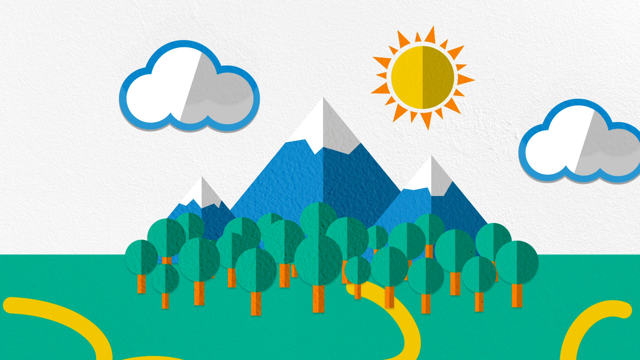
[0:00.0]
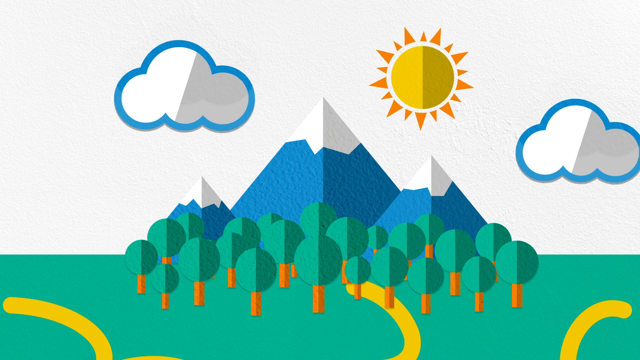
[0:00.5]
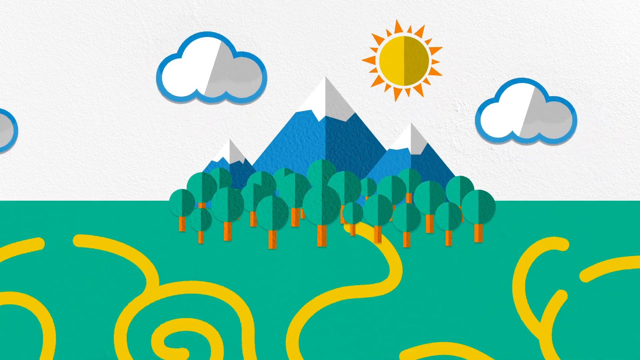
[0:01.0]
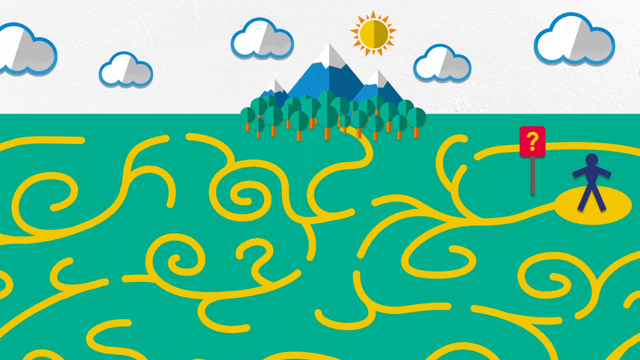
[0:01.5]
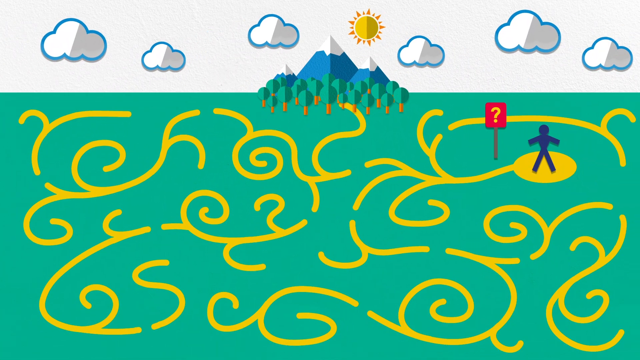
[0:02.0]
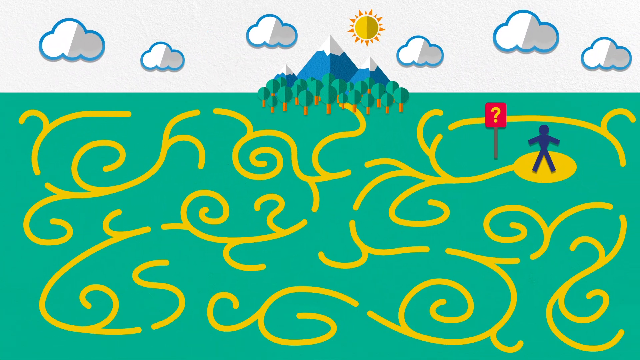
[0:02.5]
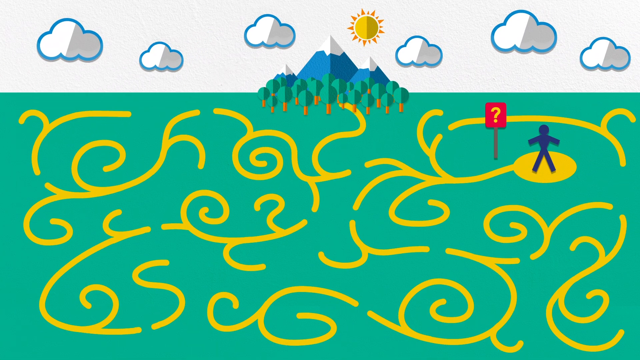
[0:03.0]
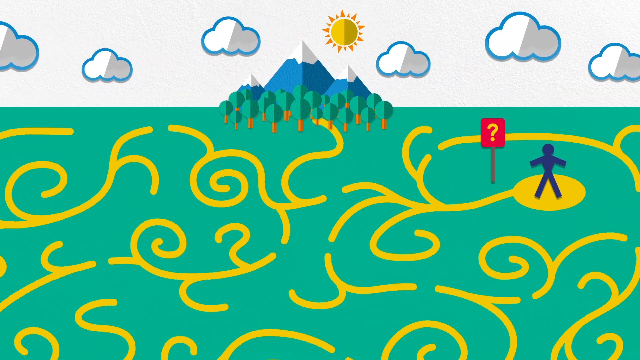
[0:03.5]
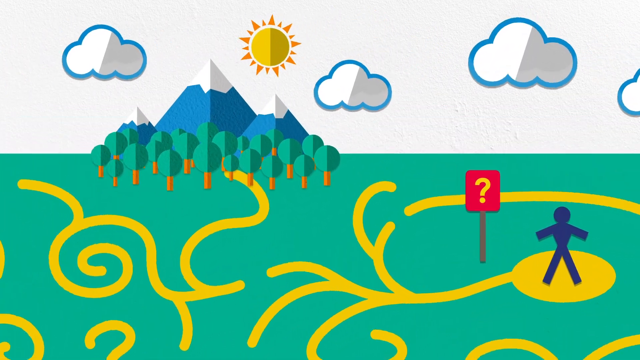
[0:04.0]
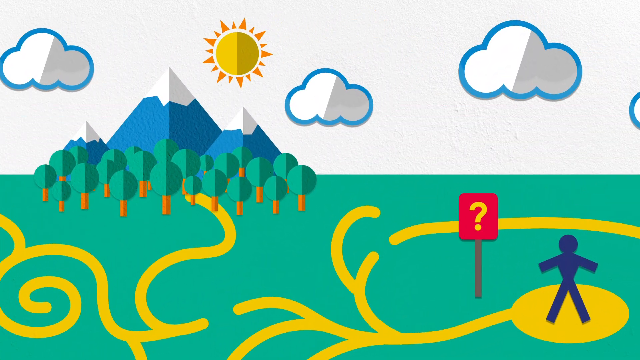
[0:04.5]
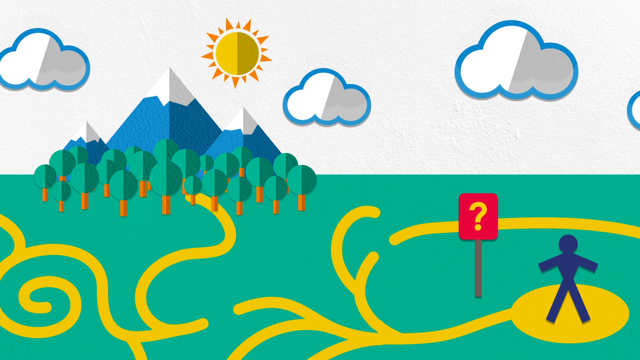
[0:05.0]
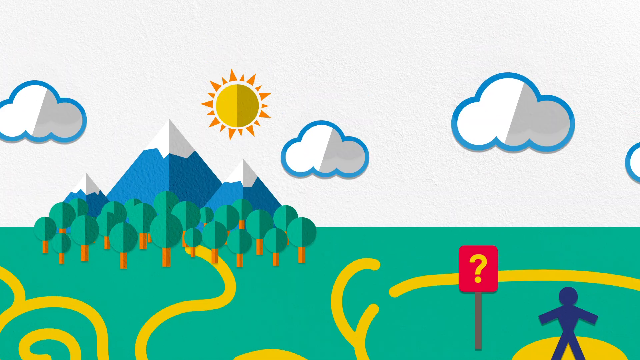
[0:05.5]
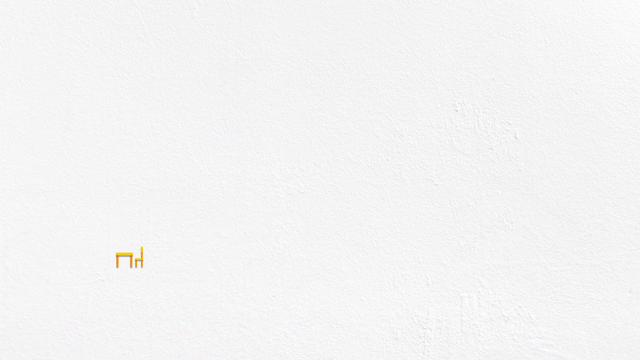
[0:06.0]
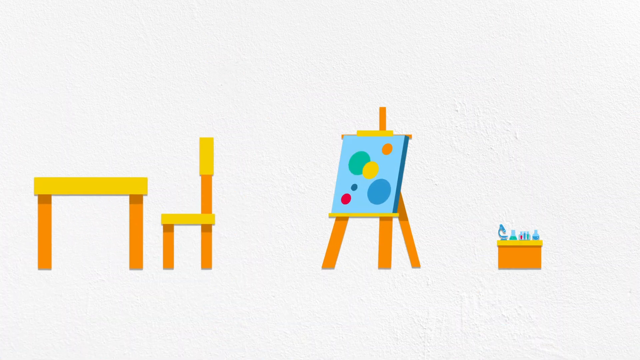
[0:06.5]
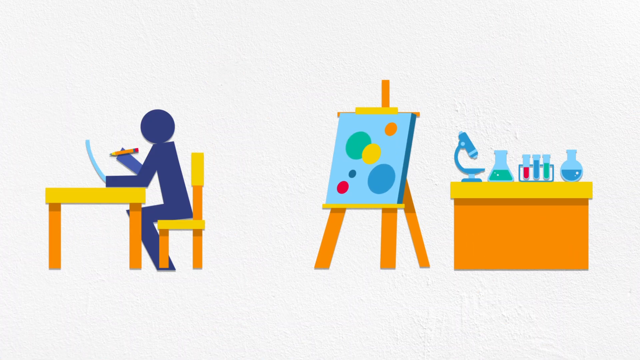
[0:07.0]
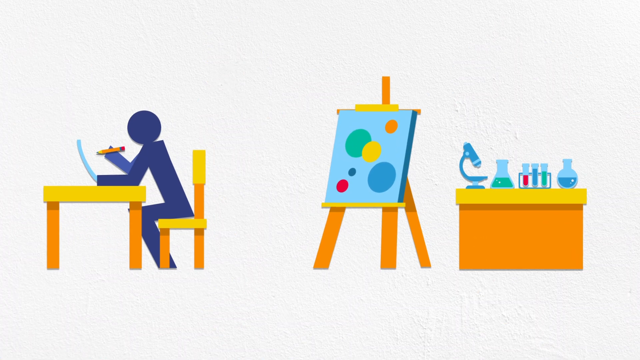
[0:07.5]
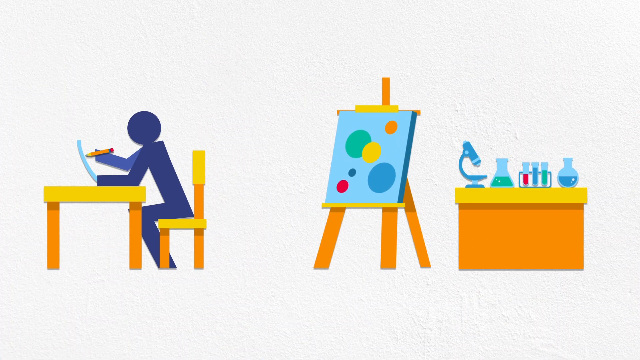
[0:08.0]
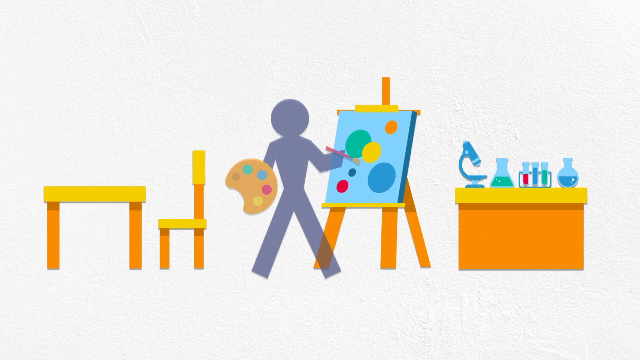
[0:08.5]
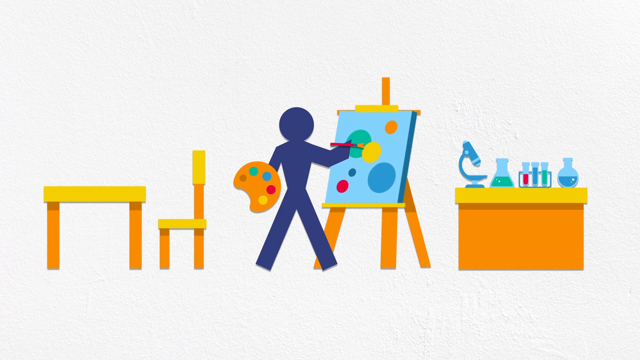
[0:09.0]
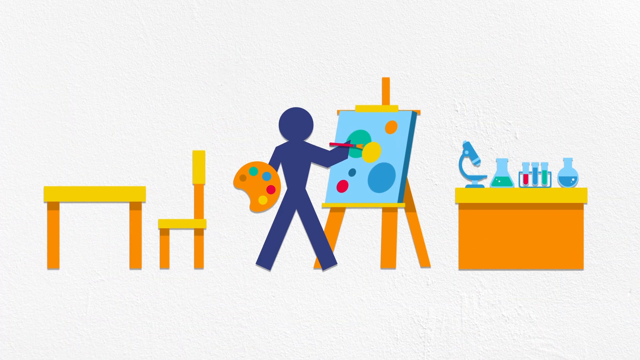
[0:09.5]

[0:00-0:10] The animation shows clouds, the sun, mountains, trees and green ground. More clouds appear, and a purple character is near a question mark sign, with yellow parts at the bottom. The sun keeps rotating and the clouds keep moving. The clouds then disappear and a new scene shows the purple character sitting on a chair, holding a pencil and writing something on a paper. A canvas is next to the character. The purple character jumps up and starts painting while holding a paintbrush. The canvas is really big, and behind it is a desk with science beakers.